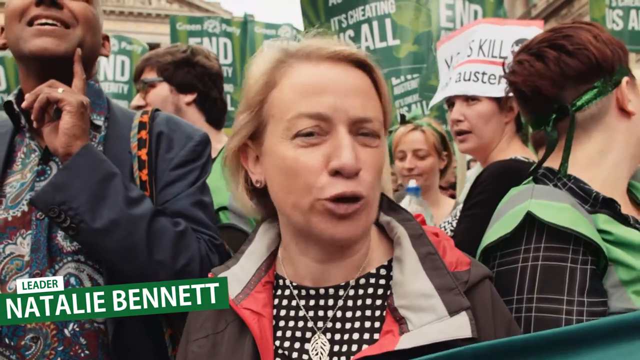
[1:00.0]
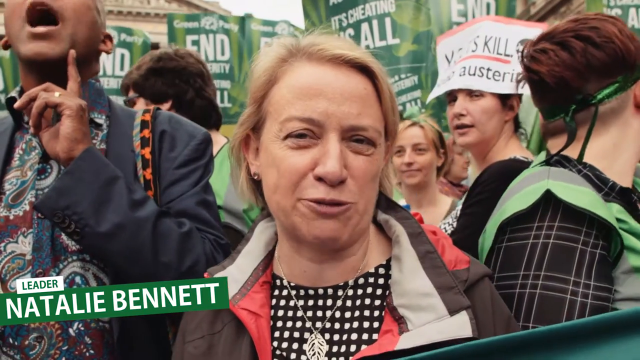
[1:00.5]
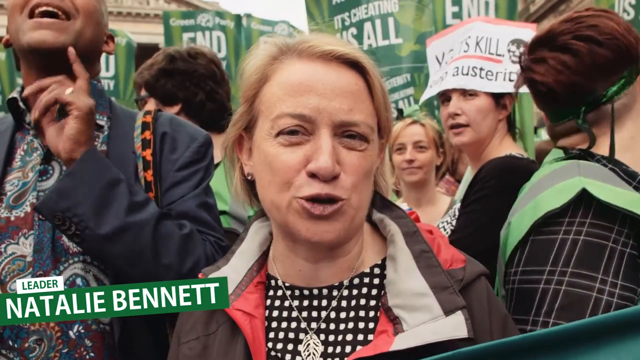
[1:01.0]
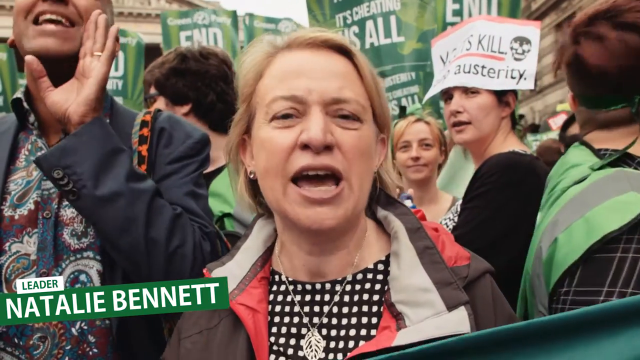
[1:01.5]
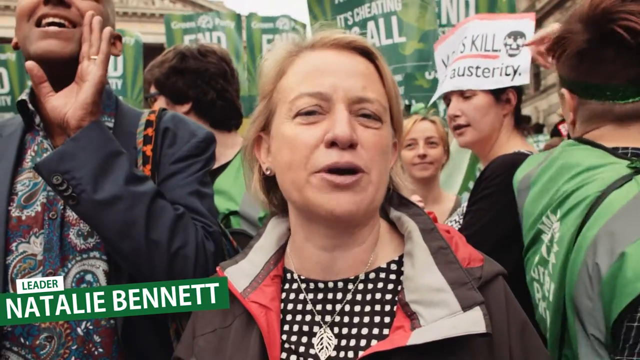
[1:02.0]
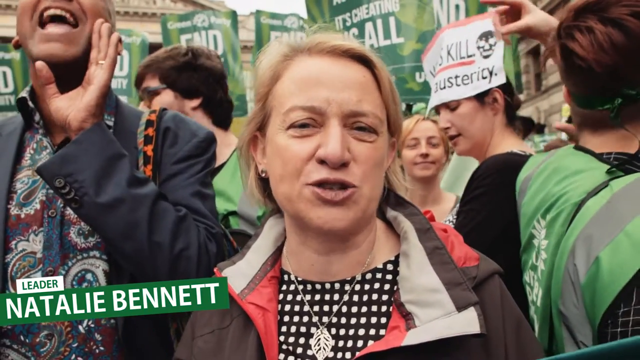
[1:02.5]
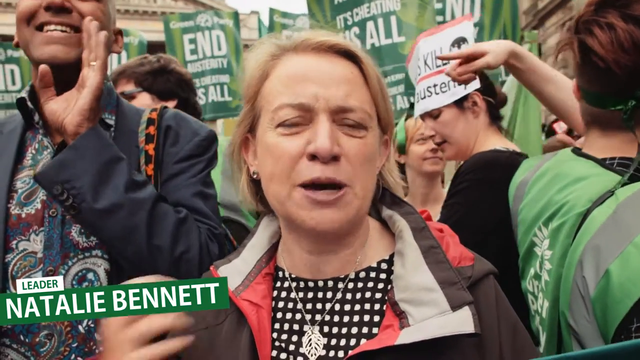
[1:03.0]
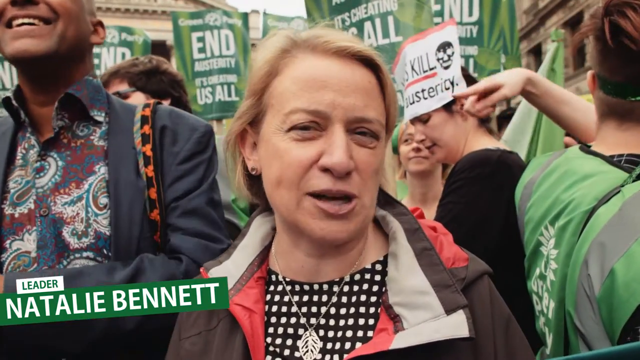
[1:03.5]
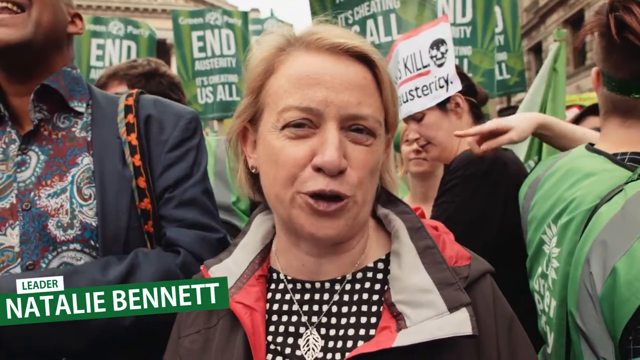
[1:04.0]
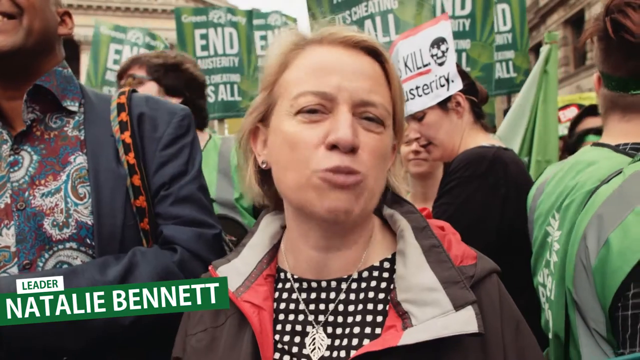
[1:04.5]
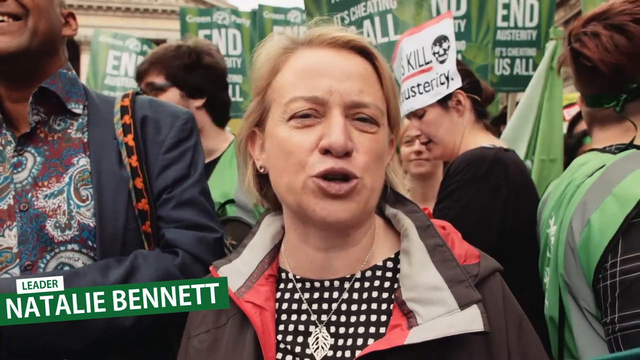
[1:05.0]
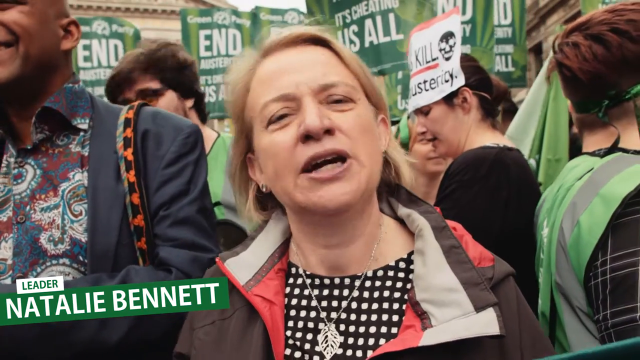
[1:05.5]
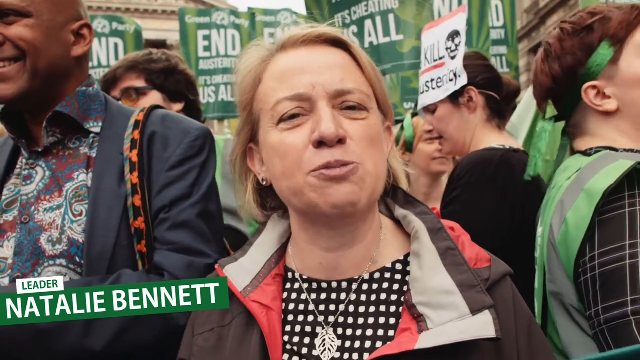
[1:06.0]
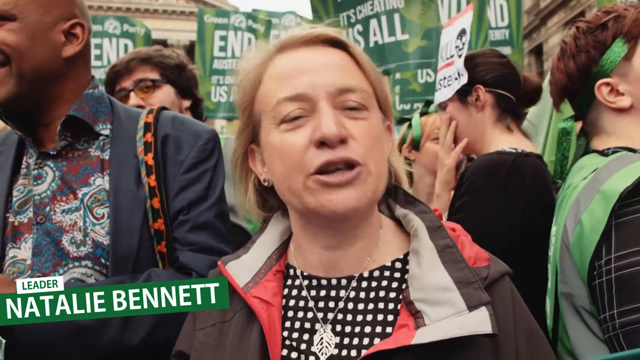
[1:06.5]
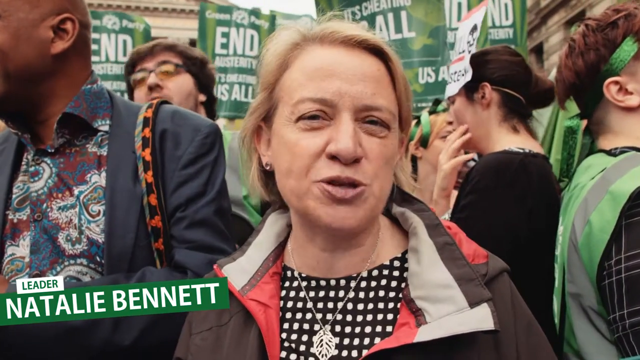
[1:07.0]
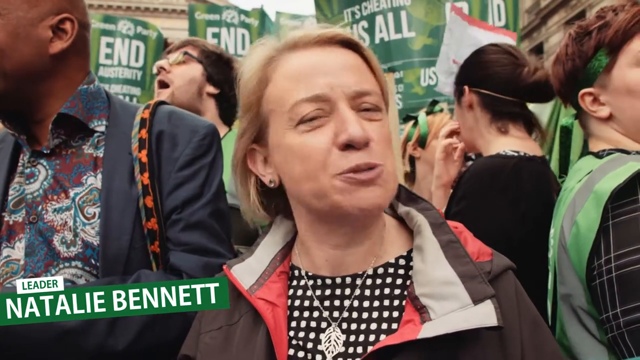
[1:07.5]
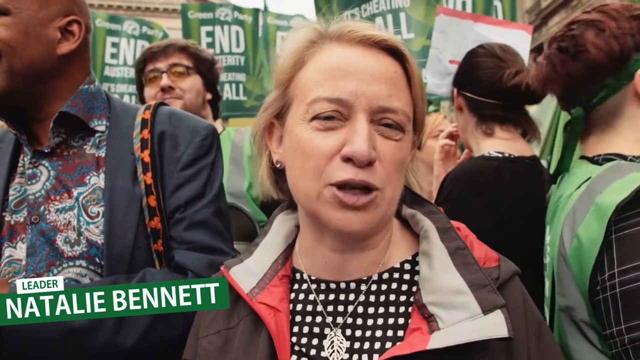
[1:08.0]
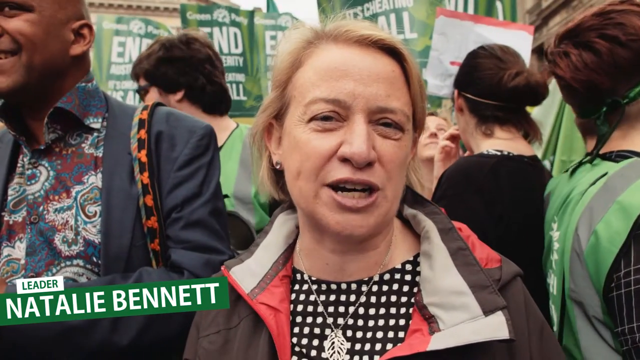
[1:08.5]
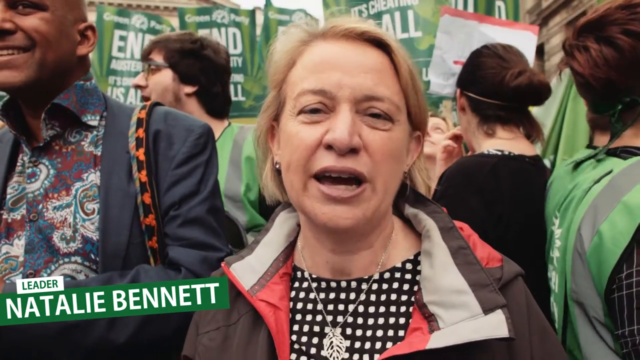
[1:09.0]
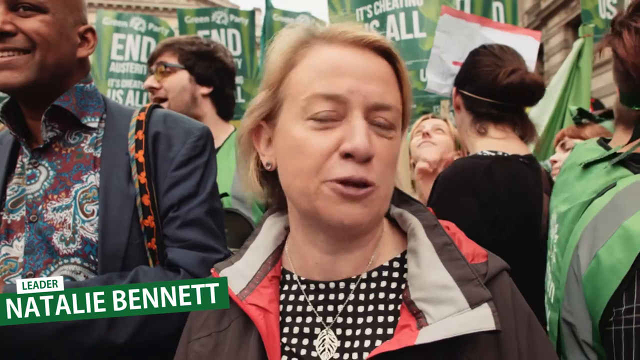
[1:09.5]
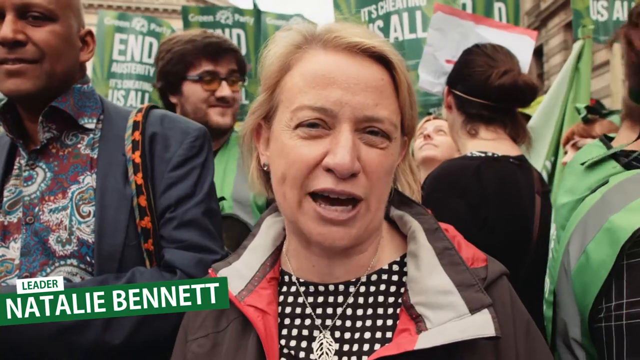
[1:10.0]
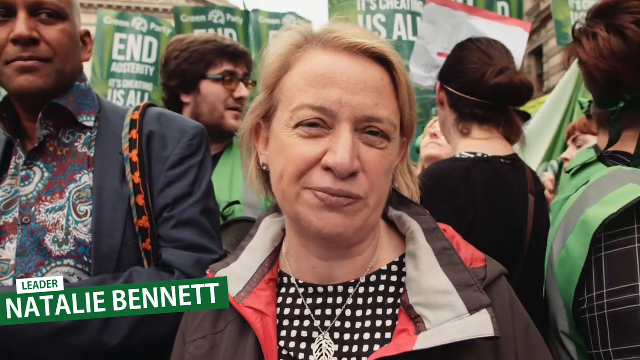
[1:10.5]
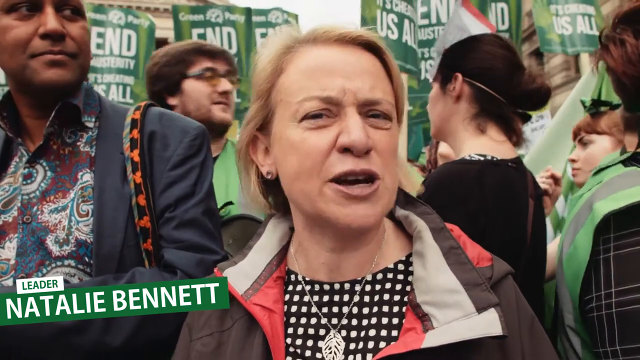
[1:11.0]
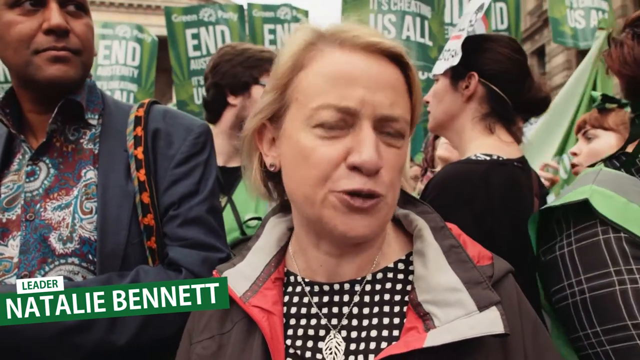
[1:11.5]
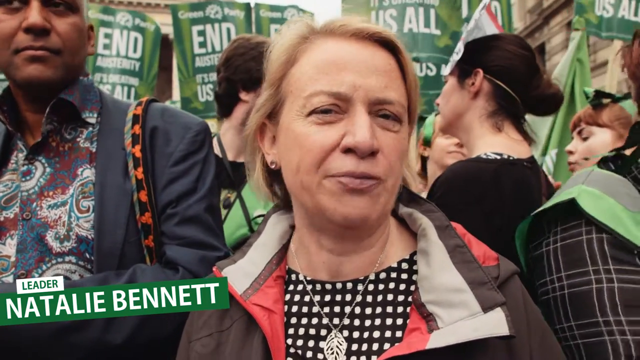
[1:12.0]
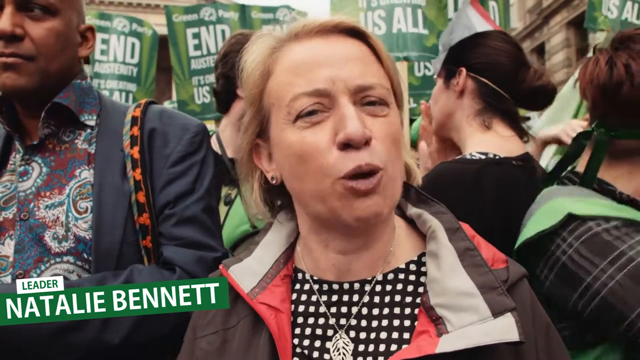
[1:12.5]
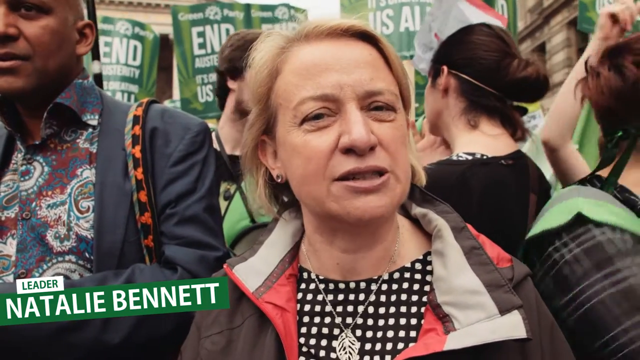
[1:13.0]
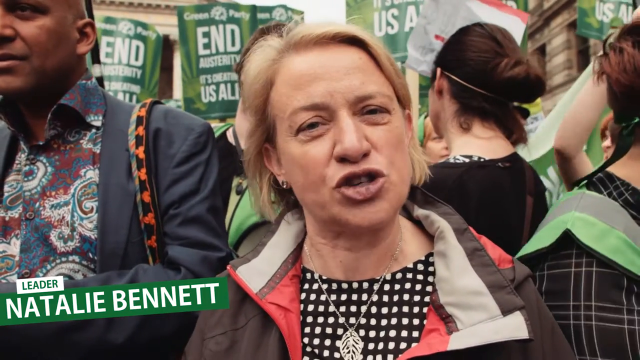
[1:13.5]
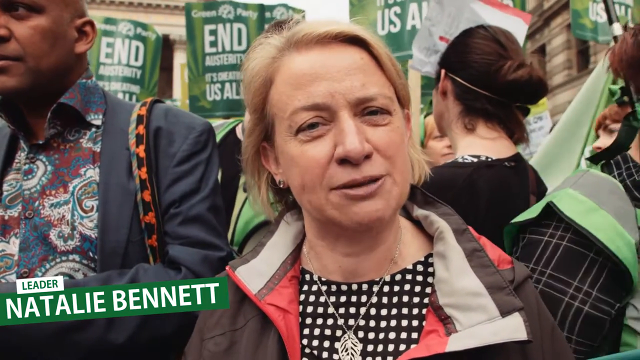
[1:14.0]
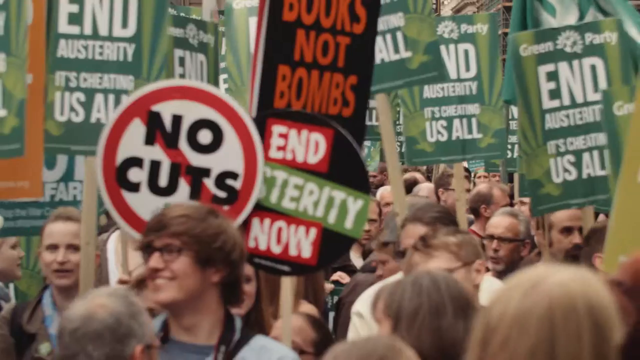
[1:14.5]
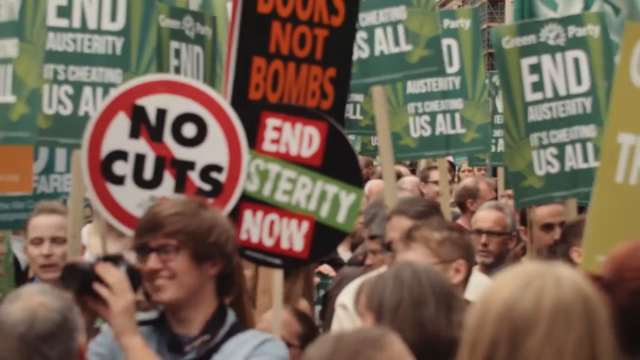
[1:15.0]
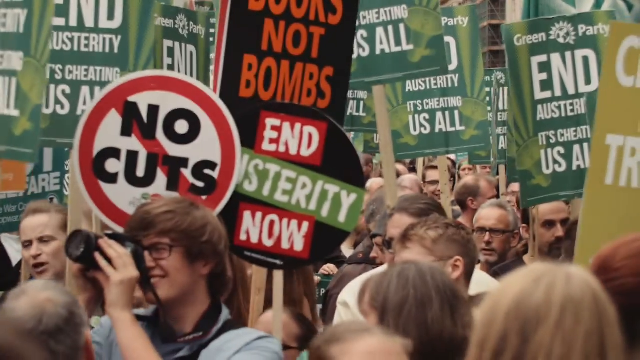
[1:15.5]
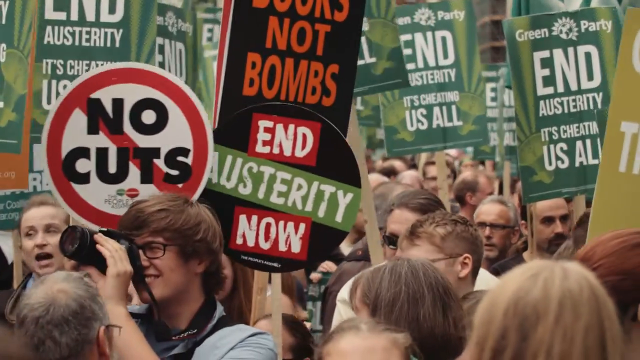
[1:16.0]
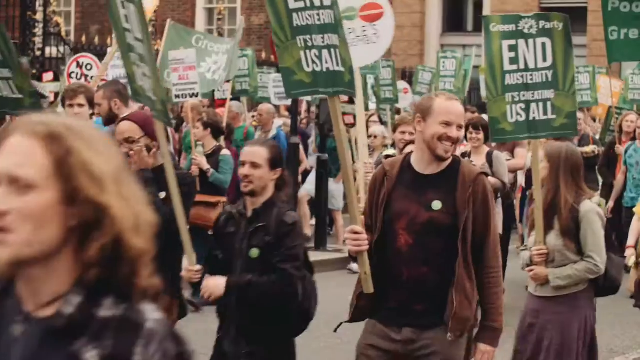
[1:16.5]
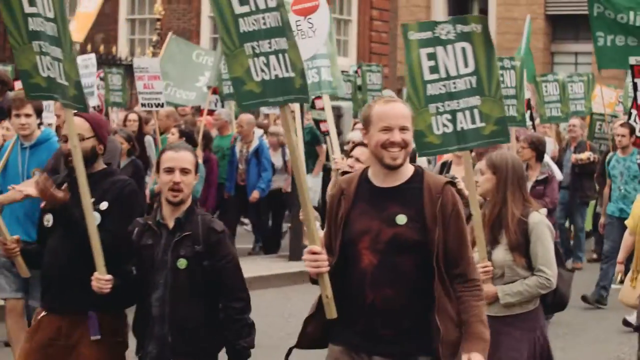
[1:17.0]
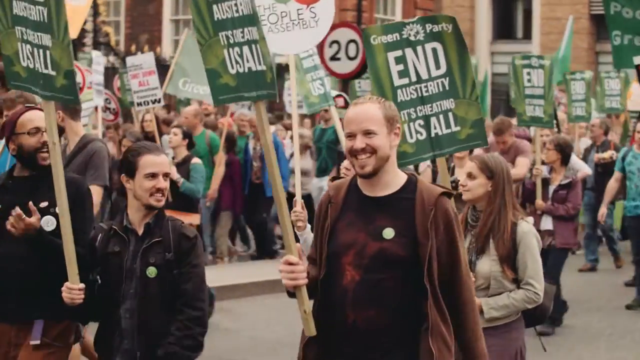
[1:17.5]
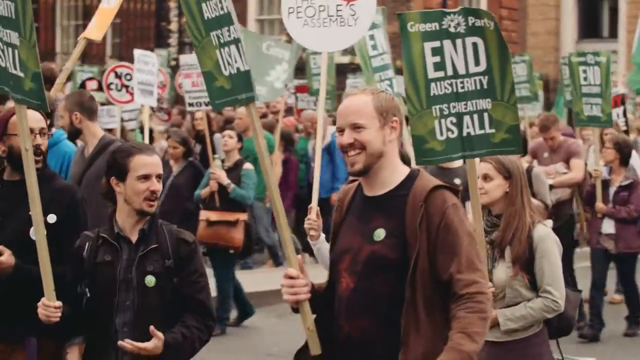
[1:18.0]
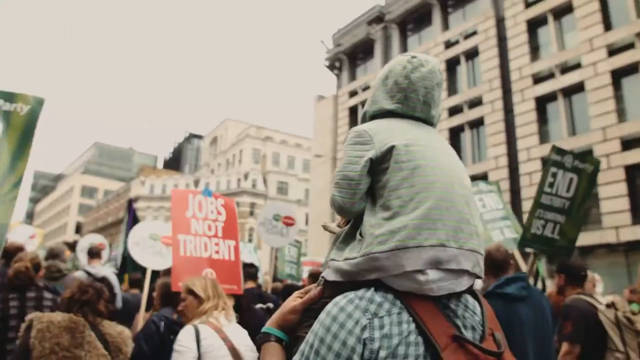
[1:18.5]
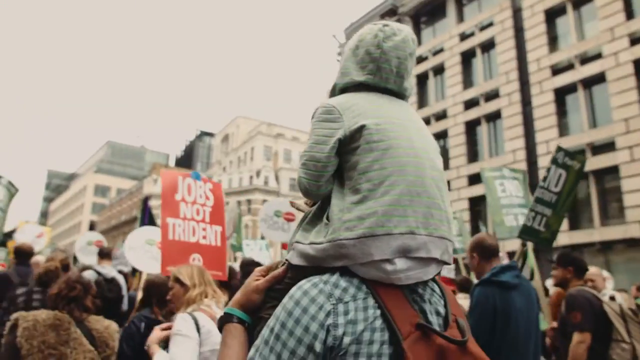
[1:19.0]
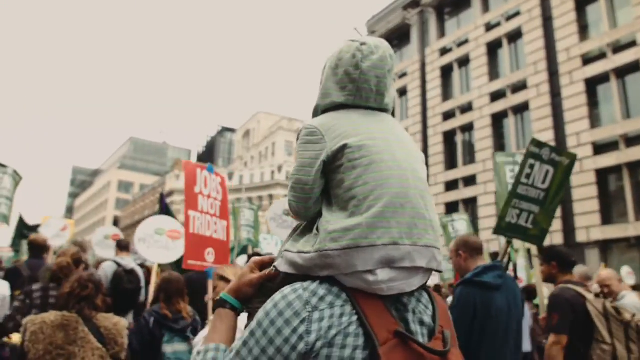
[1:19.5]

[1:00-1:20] Natalie Bennett is still being interviewed. She wears a blouse with a grid pattern like graph paper, with white squares on a dark background. She looks to be in her early 50s, has blonde hair, and talks to the media. Behind her are many Green Party members with placards reading "end austerity, it's cheating us all," and the rally is large. To her left, Dr. Shahrar Ali shouts to the crowd as if encouraging them. Ms. Bennett wears a silver necklace and earrings. As the camera pans forward, more placards read "no cuts," "books not bombs," and "end austerity now." Most of the protesters are Caucasian, and one holds an SLR camera, taking pictures of the event. The camera pans to people marching forward, and another placard with a red background and white font reads "jobs not trident."